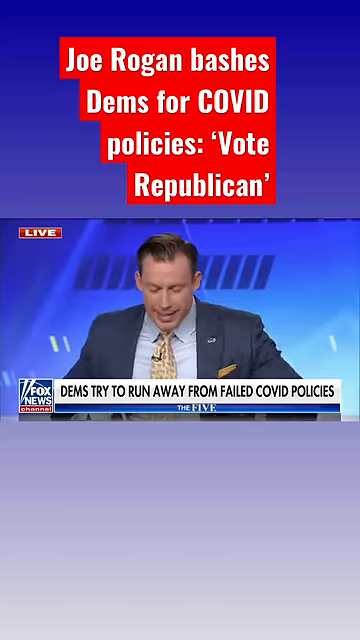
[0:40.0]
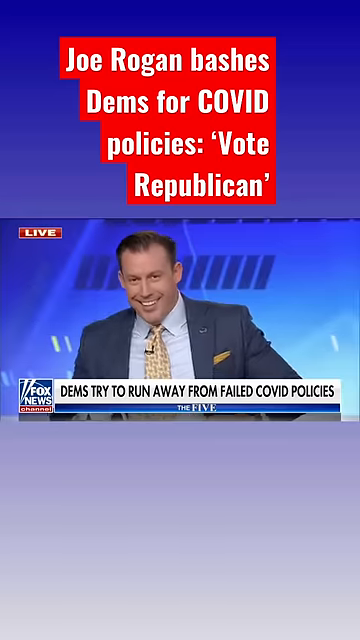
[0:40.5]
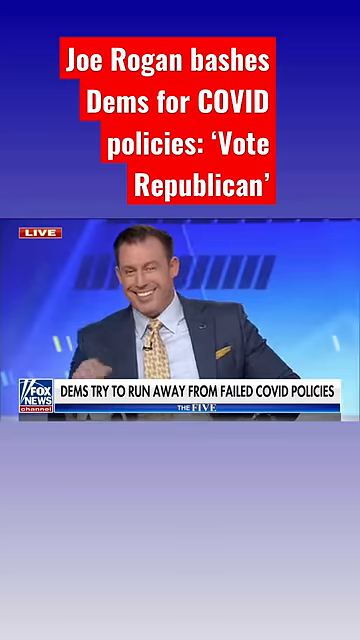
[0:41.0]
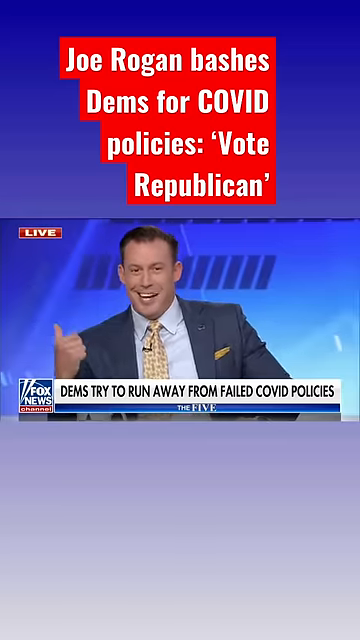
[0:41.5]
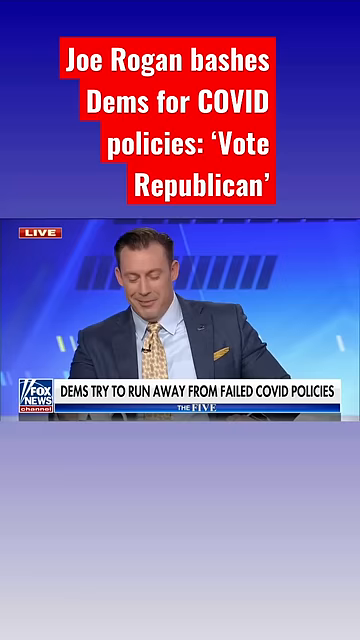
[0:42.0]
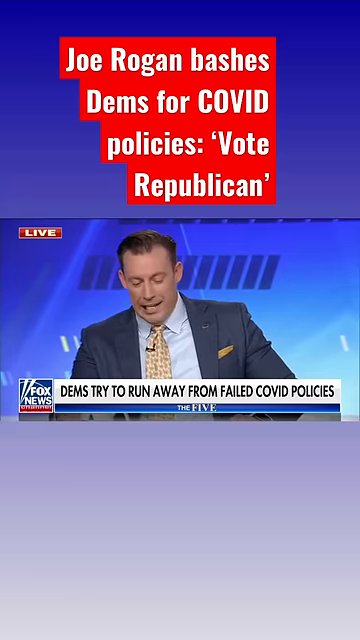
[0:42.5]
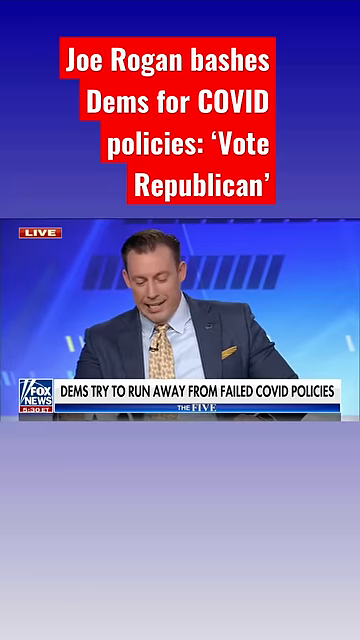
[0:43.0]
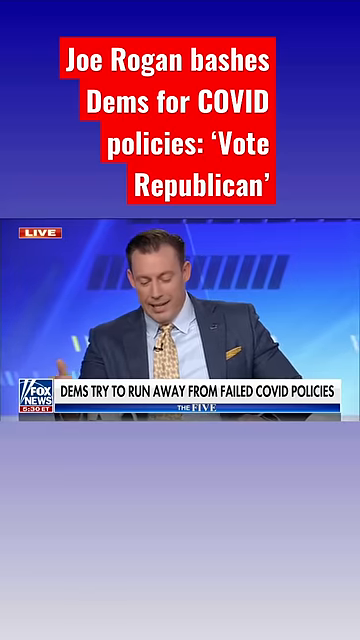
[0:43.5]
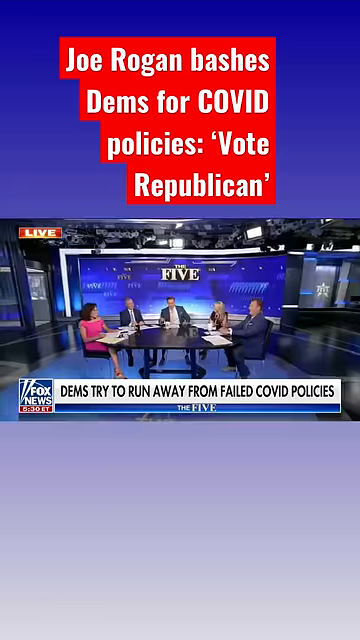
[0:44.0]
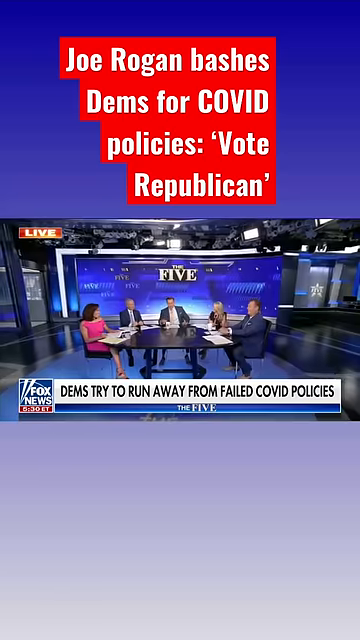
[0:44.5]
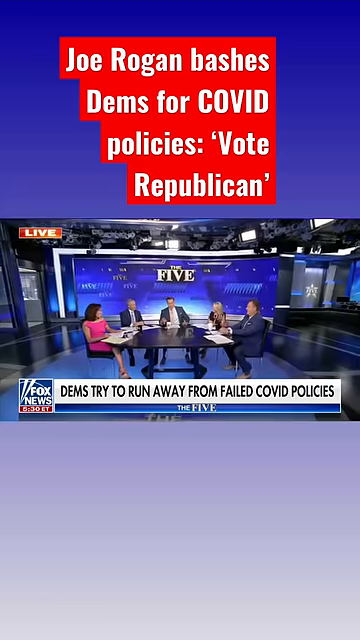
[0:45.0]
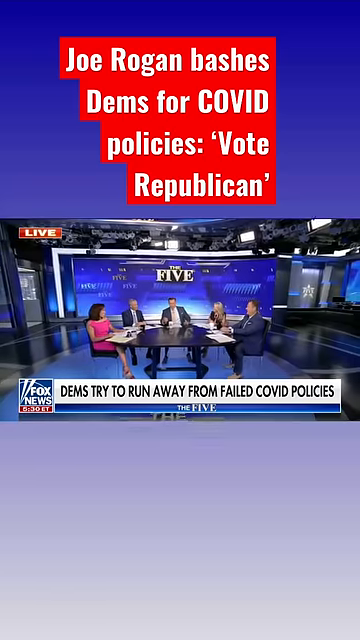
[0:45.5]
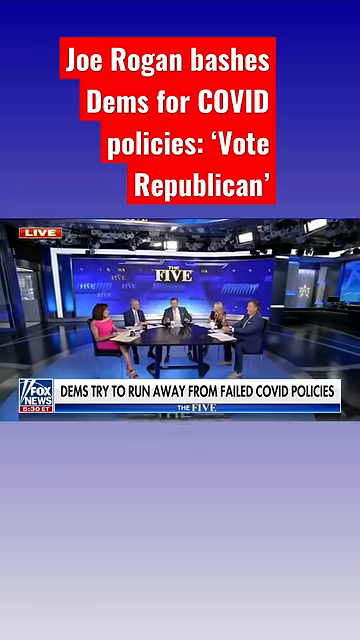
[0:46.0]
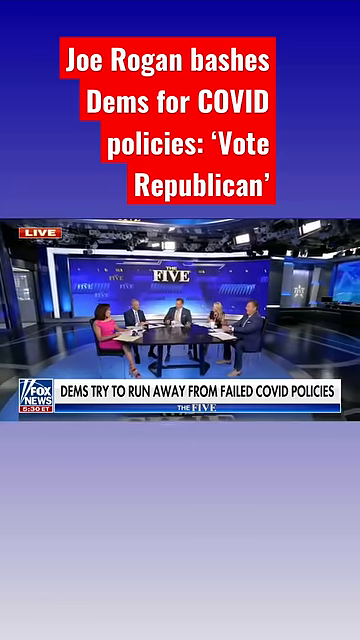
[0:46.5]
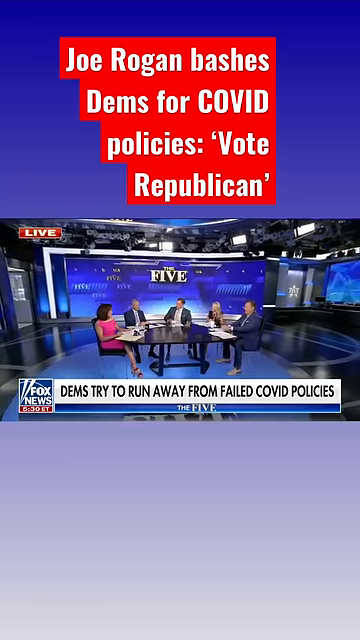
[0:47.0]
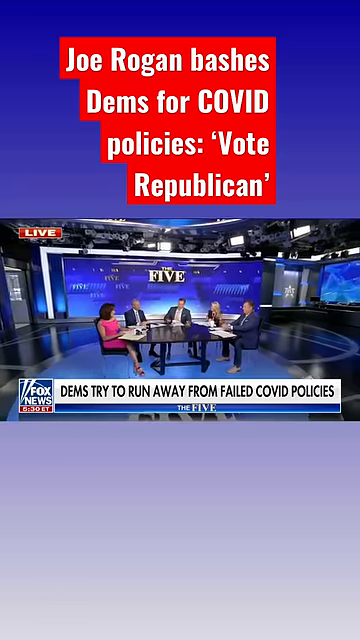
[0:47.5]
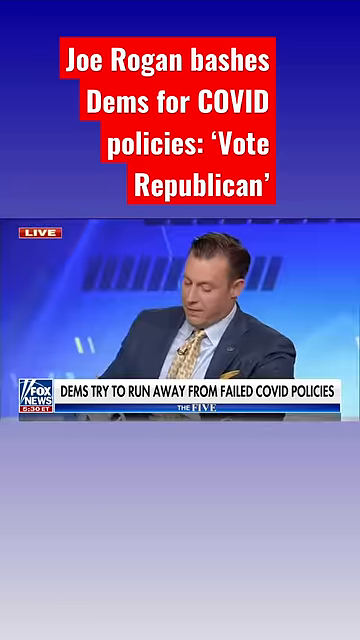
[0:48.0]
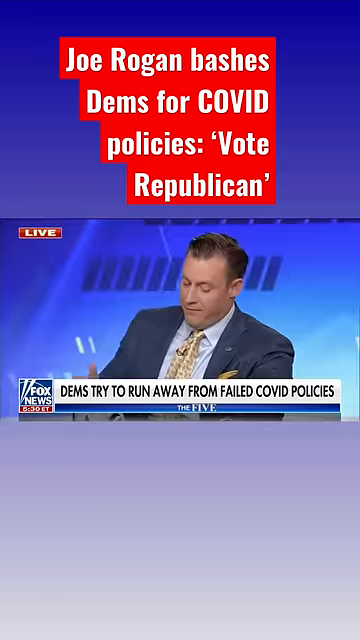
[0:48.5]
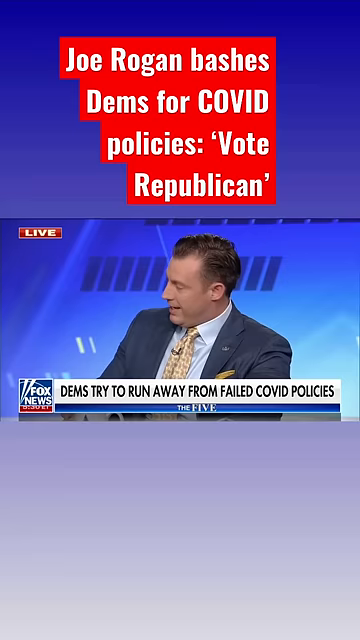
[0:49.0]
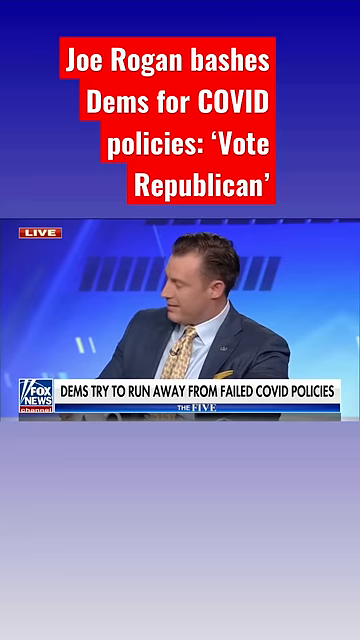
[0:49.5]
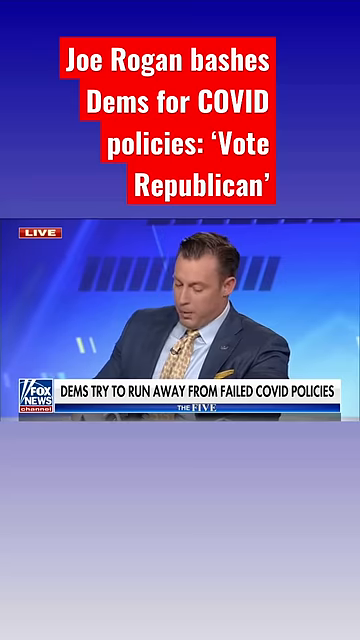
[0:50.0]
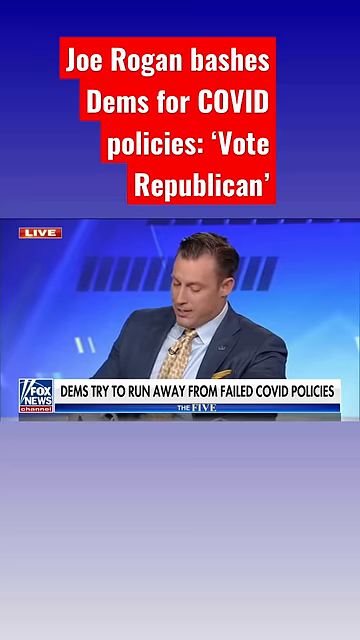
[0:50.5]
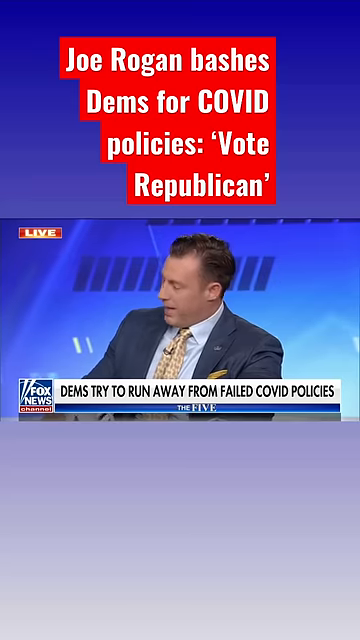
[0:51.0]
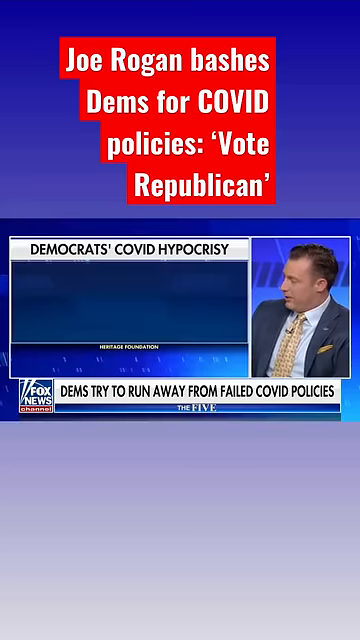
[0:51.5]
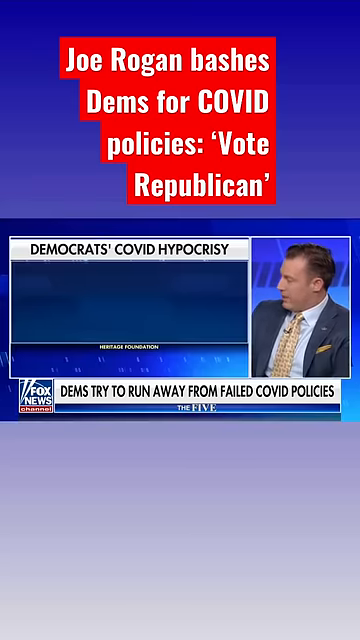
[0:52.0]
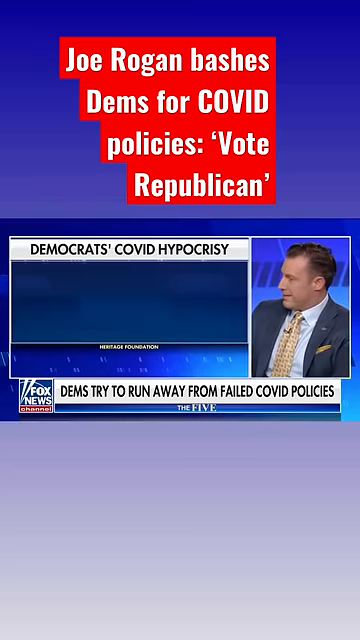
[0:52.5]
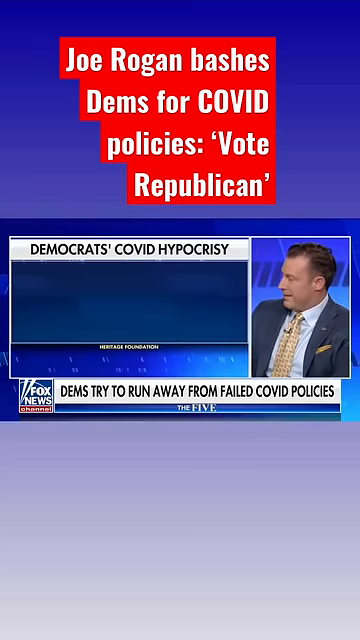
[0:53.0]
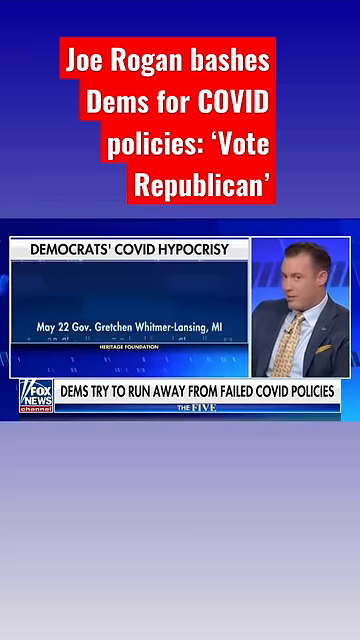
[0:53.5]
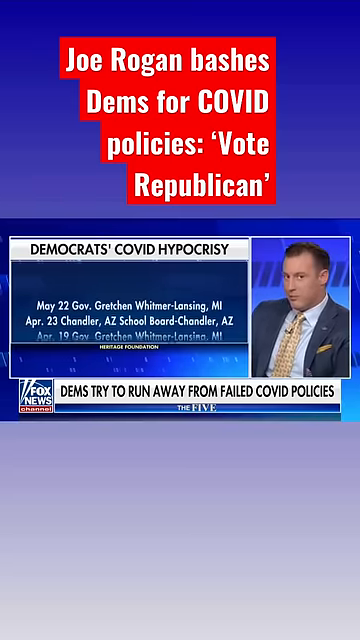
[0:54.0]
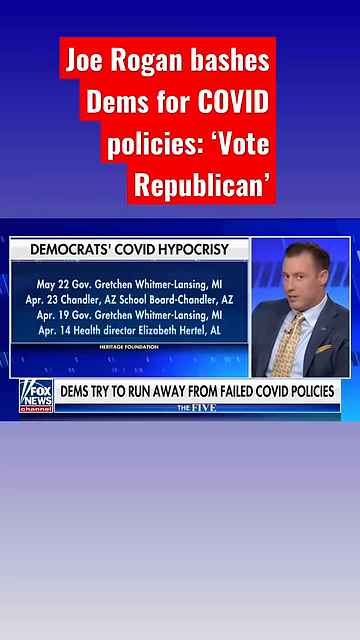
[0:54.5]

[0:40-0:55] On screen is the text "Dems try to run away from failed COVID policy," apparently referring to a failed COVID policy. The discussion is framed around "Democrats COVID hypocrisy," with further items listed alongside it. The video appears to be asking for votes for Republicans.